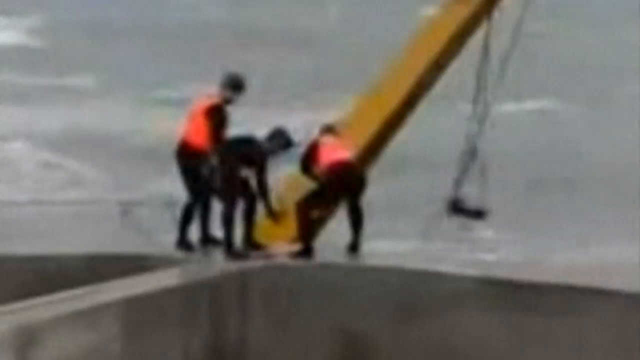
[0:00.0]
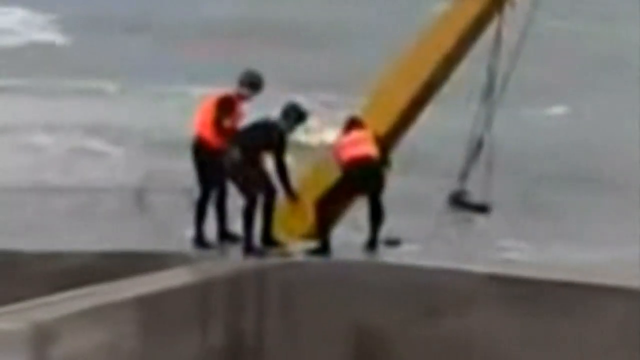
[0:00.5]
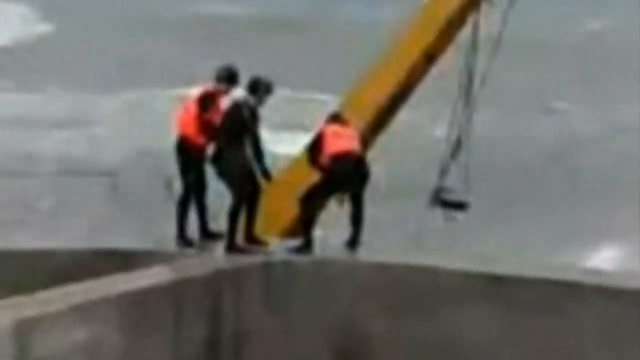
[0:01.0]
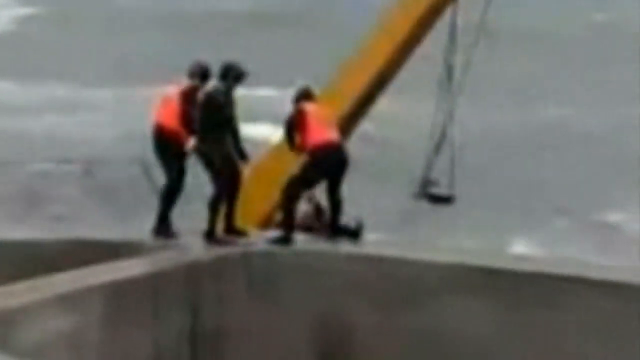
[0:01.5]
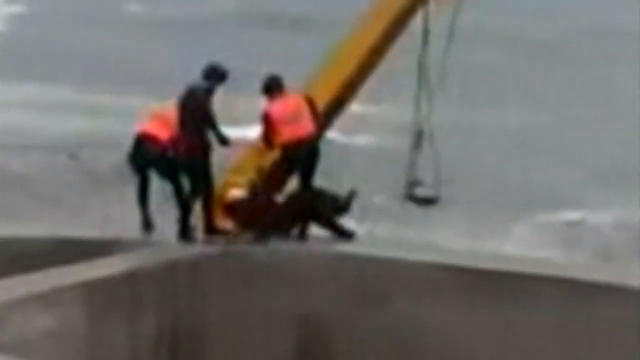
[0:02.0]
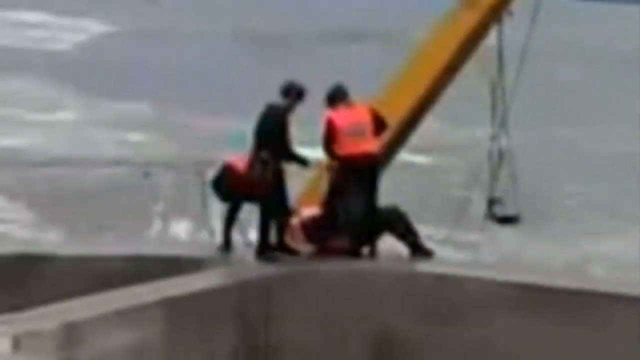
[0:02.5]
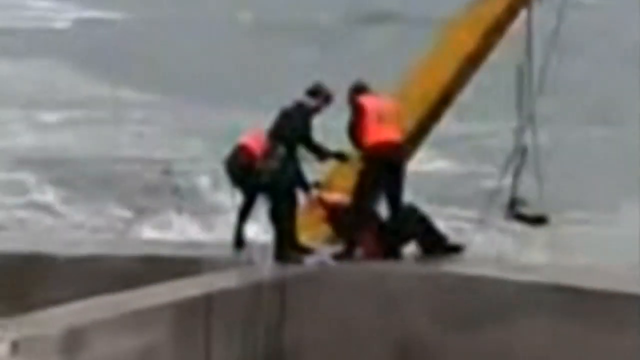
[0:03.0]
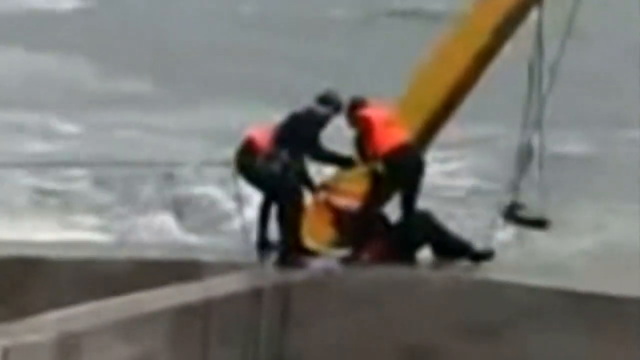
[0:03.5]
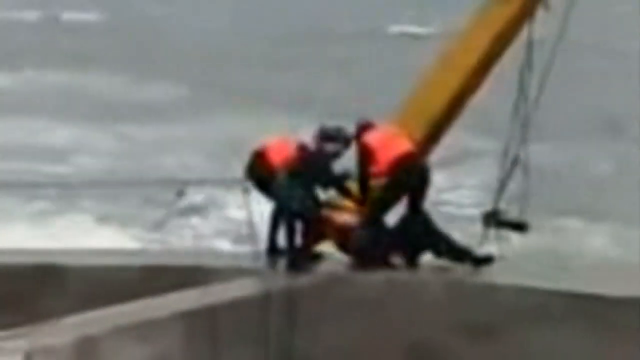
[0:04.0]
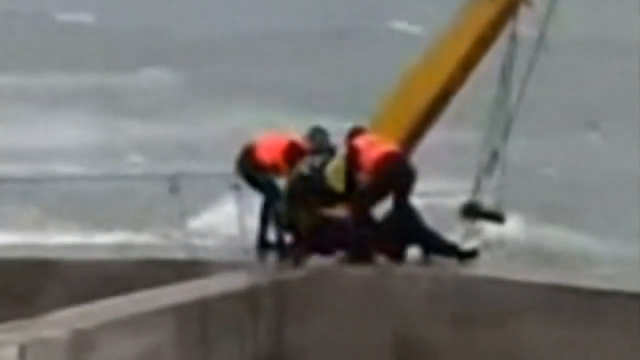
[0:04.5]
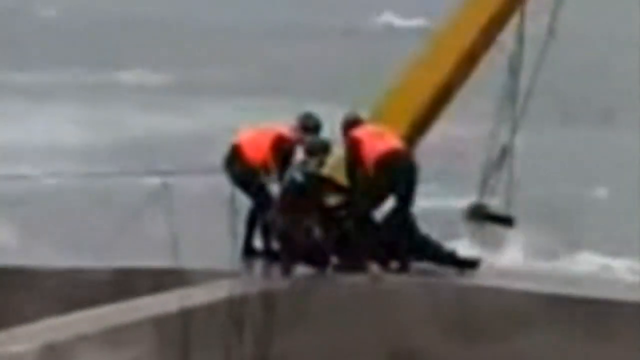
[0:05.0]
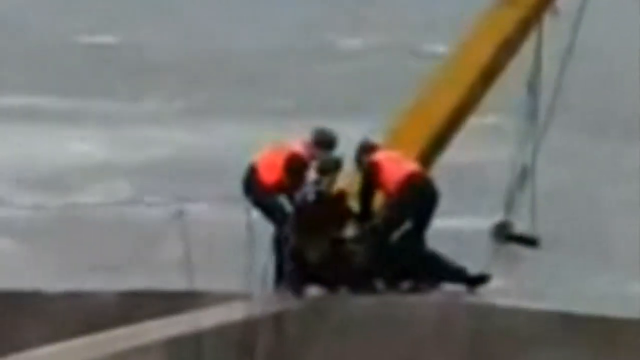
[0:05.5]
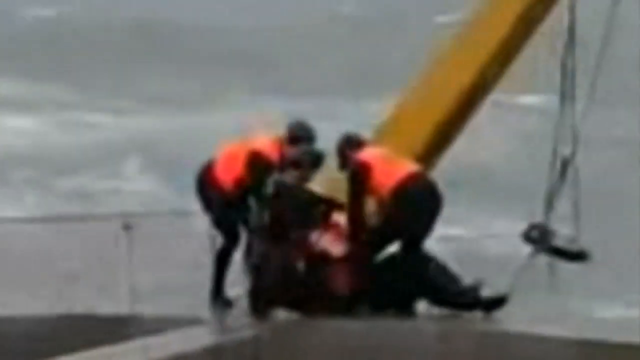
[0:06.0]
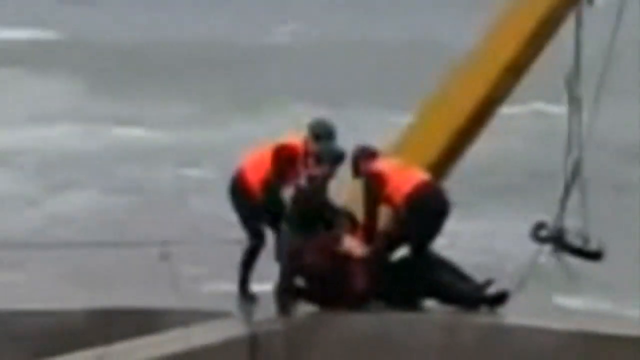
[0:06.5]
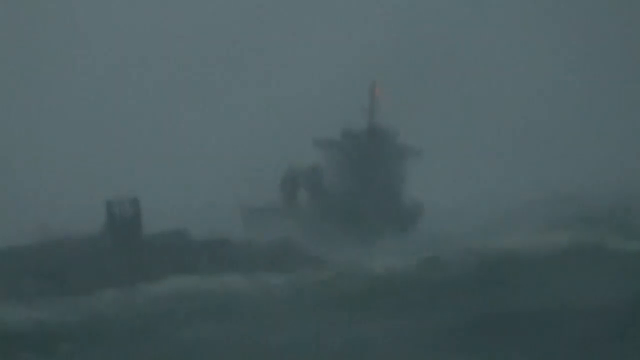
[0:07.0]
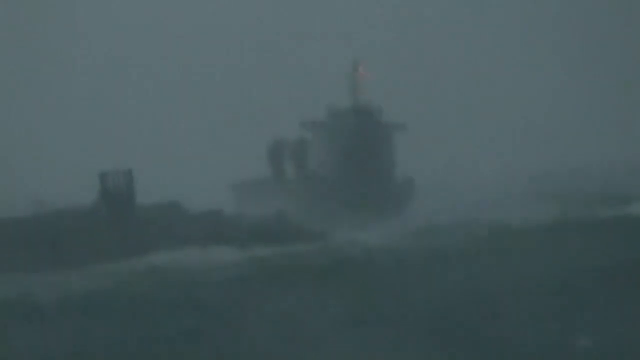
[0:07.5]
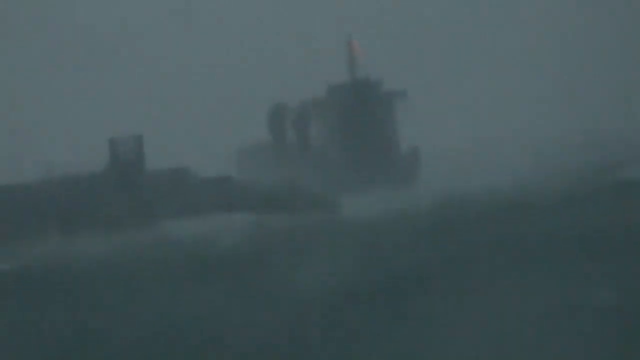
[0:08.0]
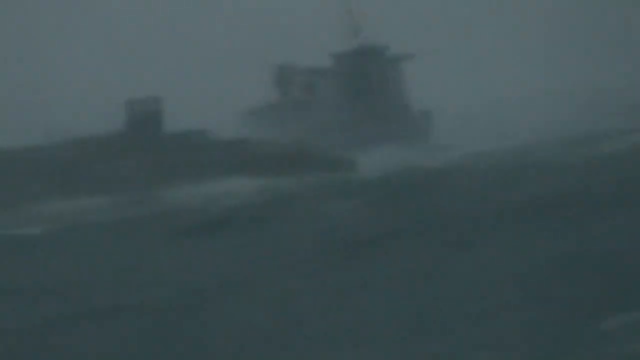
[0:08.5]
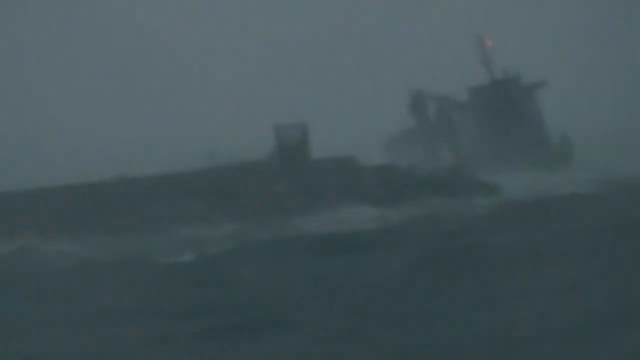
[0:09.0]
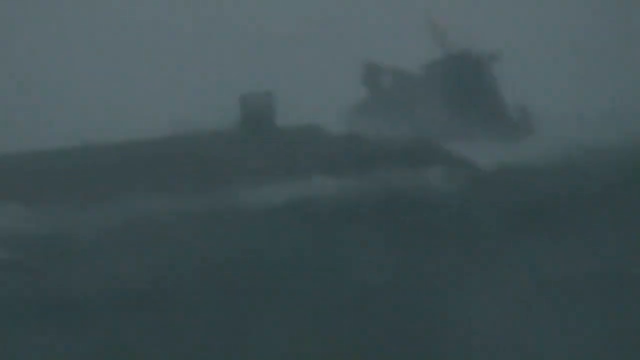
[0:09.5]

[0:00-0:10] The video is very blurry and of poor quality. Three people are in front of a yellow crane. The two on either side wear orange vests and black clothing, including black hats, while the person in the middle, dressed all in black, is bending over and reaching down at the bottom of the crane. They are on a boat at sea, with waves coming up over the edge, and they are pulling a person up onto the edge of the boat. Next, a stormy ocean appears, with a boat rocking back and forth in the surf. The footage is blurry and sort of grainy, making it hard to tell what is going on.